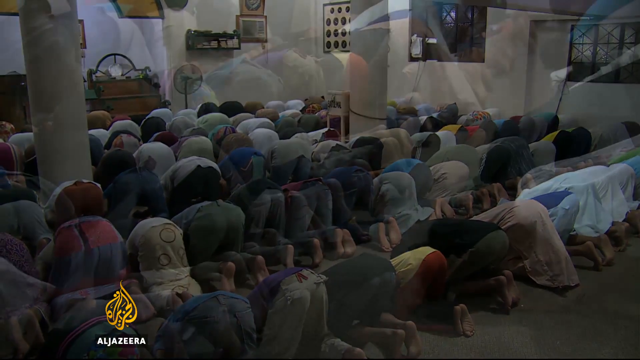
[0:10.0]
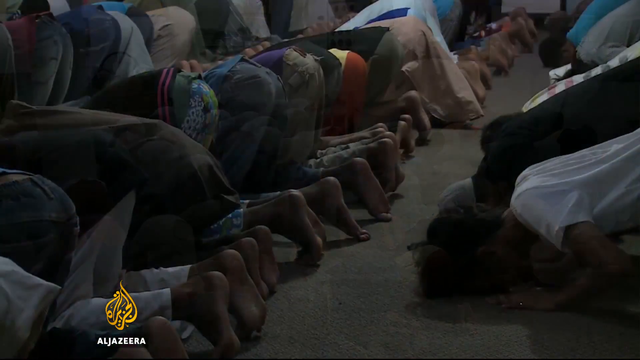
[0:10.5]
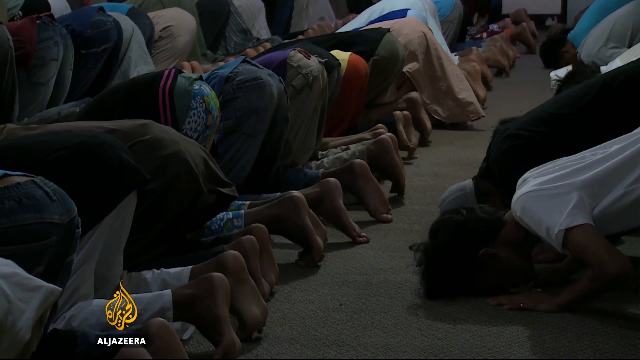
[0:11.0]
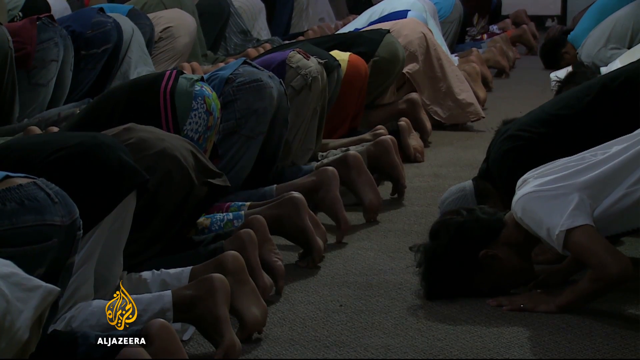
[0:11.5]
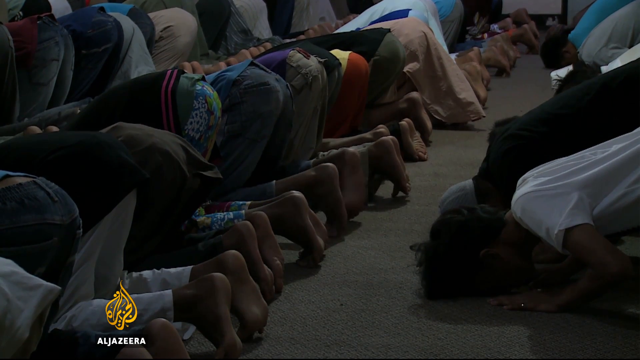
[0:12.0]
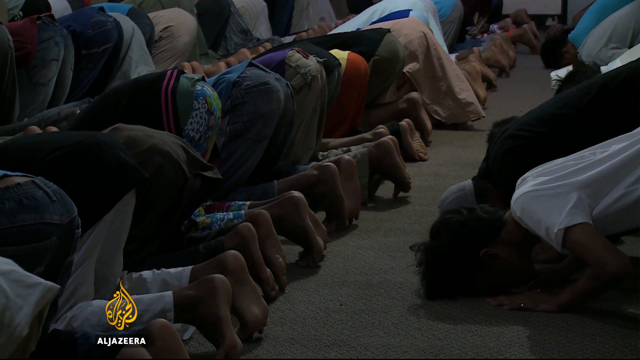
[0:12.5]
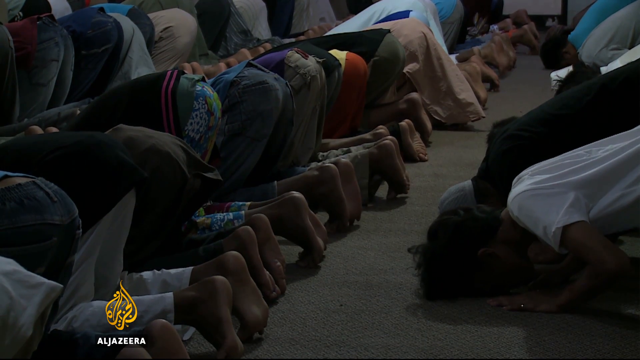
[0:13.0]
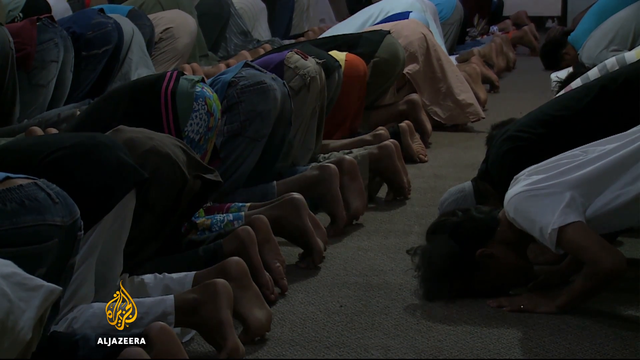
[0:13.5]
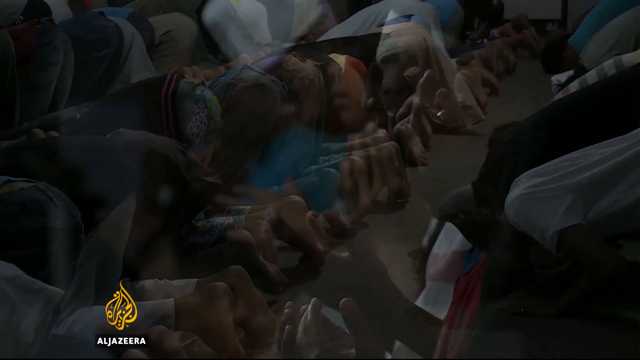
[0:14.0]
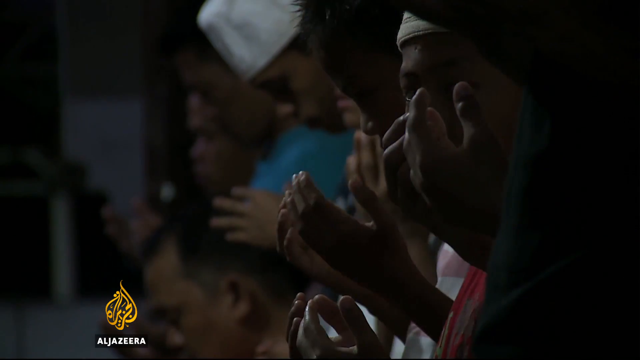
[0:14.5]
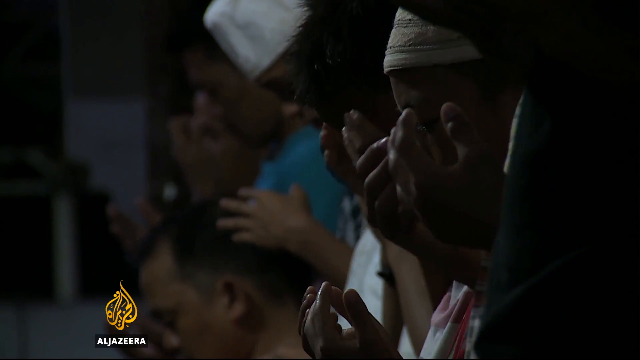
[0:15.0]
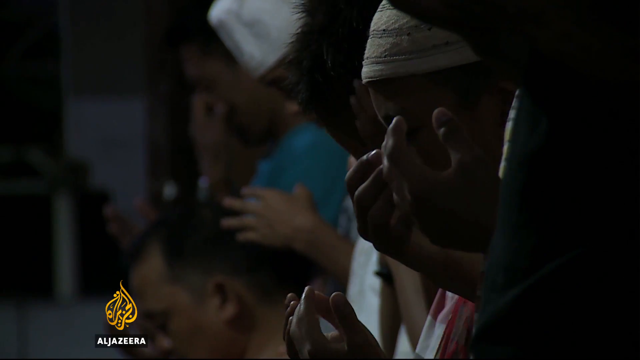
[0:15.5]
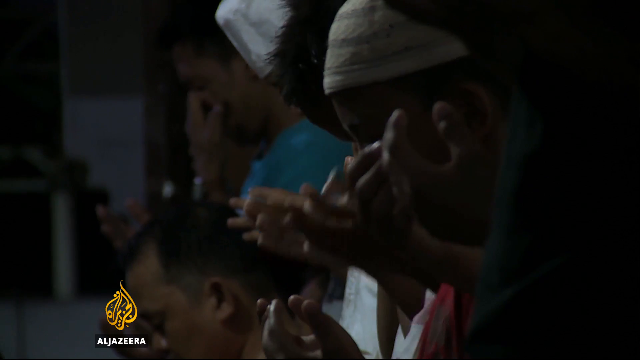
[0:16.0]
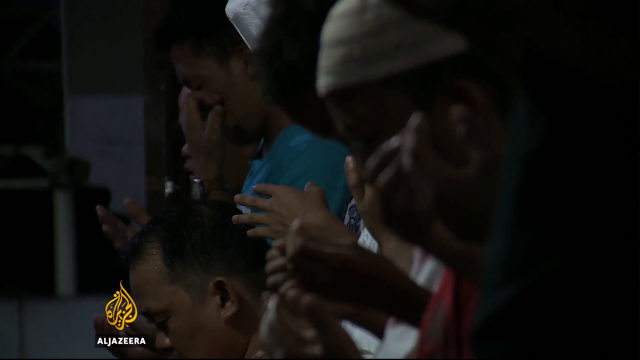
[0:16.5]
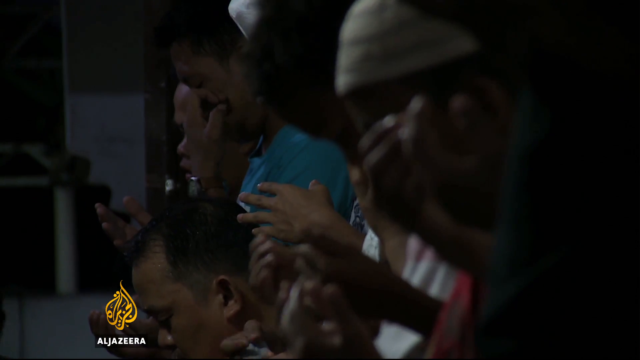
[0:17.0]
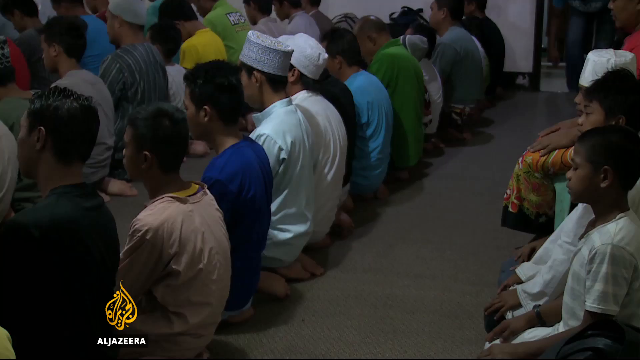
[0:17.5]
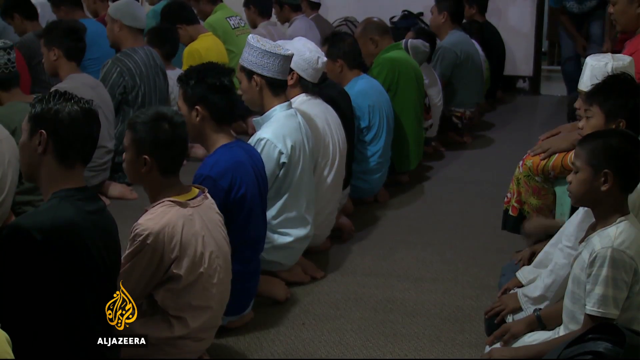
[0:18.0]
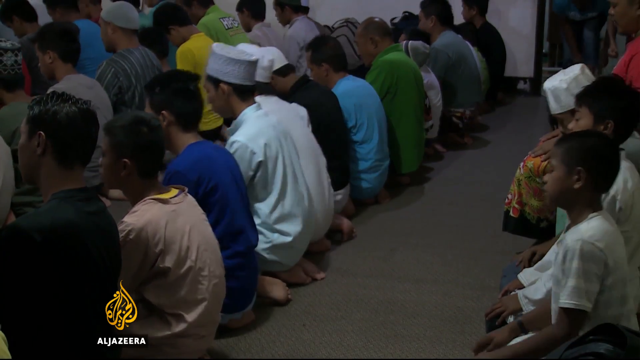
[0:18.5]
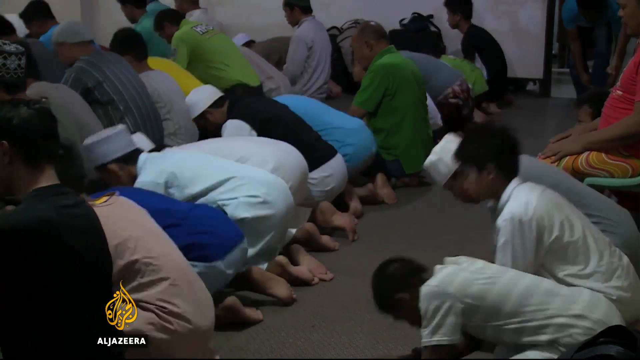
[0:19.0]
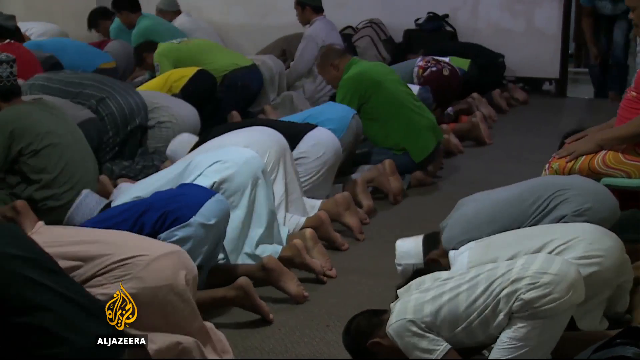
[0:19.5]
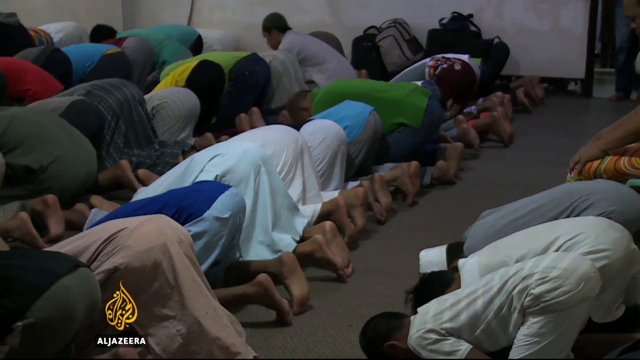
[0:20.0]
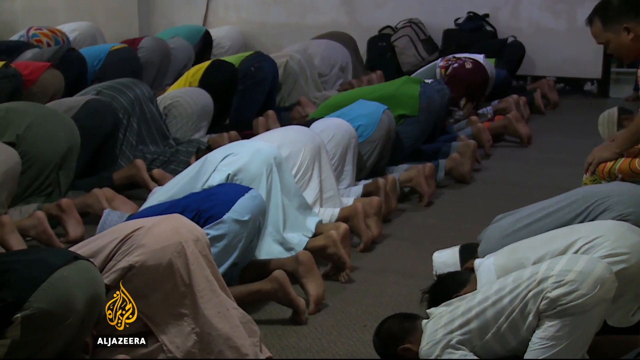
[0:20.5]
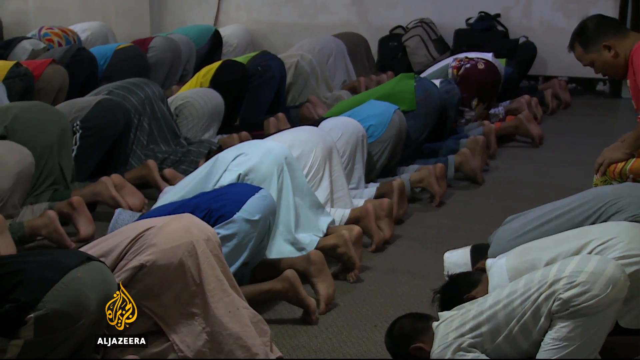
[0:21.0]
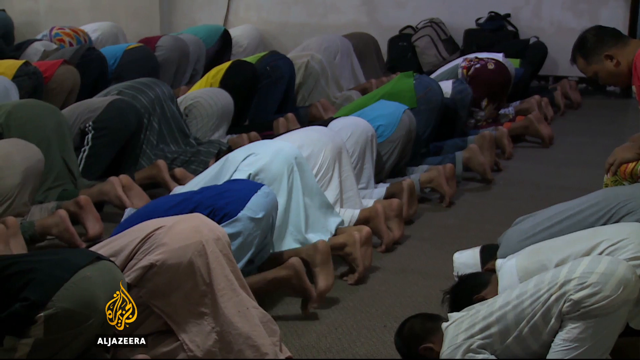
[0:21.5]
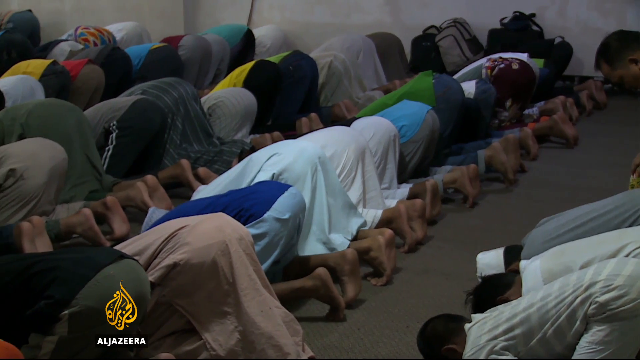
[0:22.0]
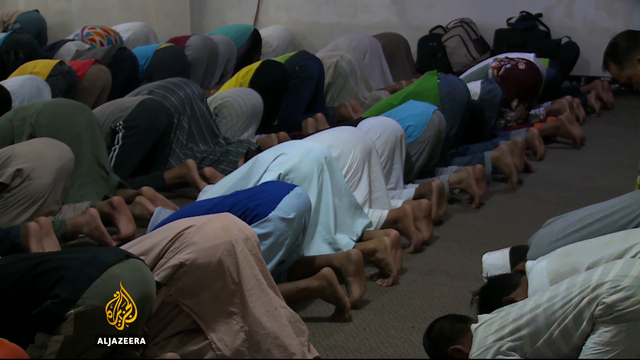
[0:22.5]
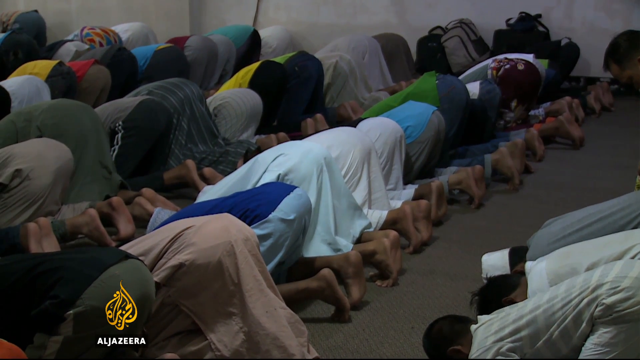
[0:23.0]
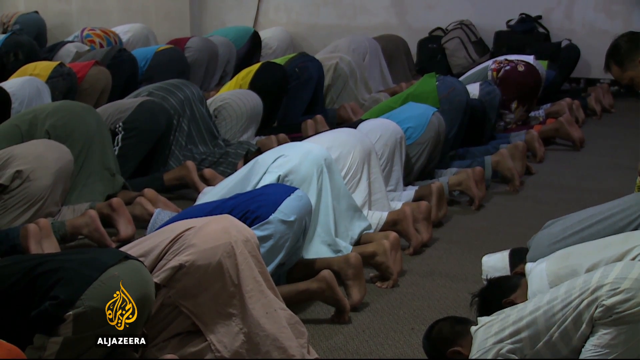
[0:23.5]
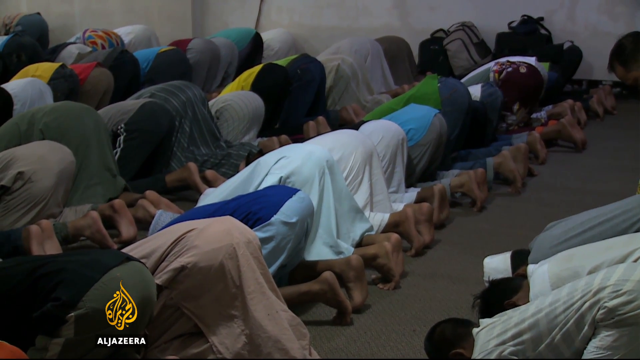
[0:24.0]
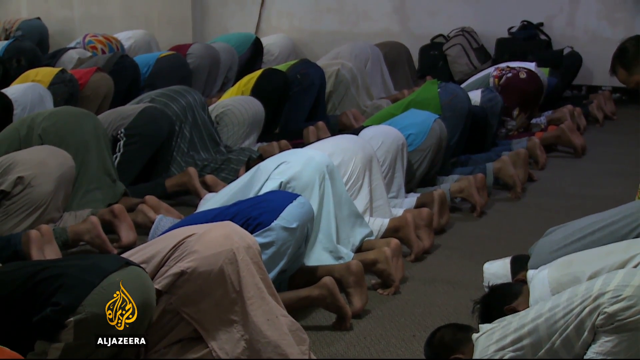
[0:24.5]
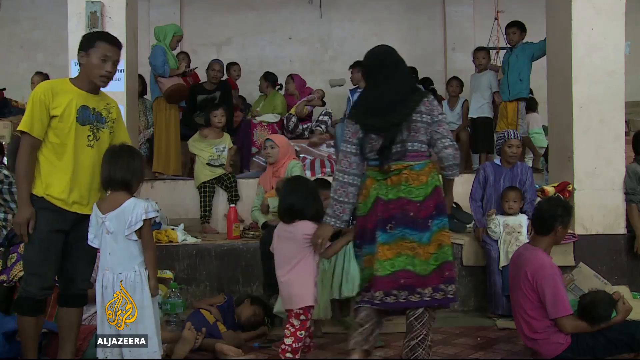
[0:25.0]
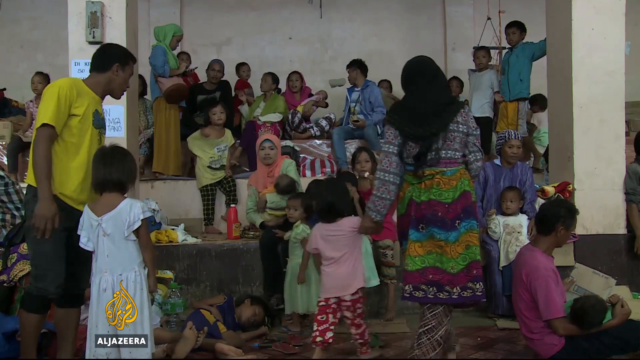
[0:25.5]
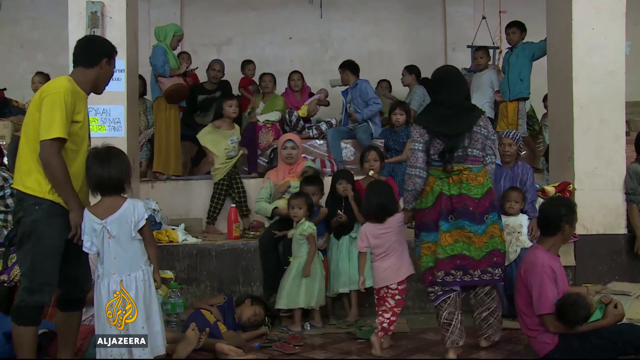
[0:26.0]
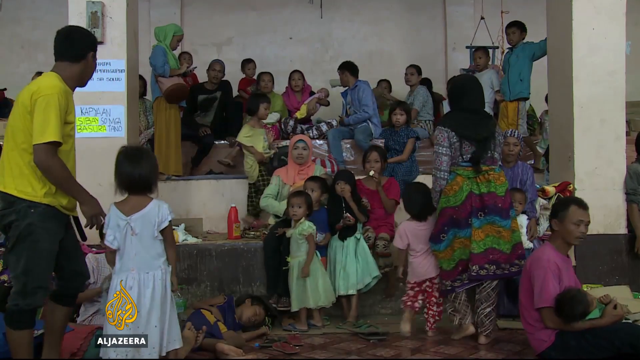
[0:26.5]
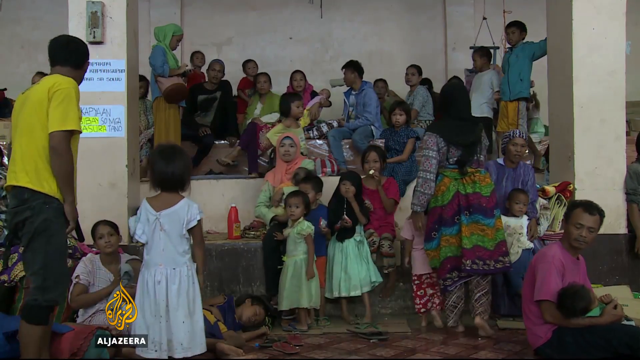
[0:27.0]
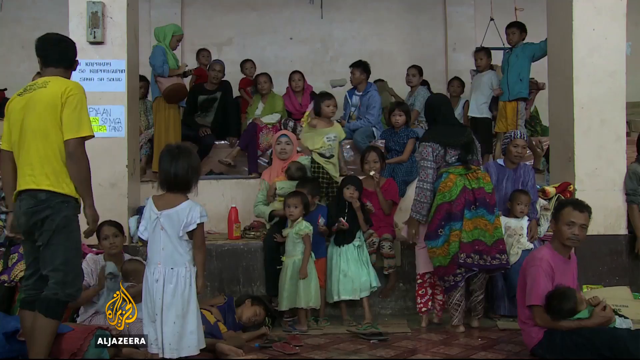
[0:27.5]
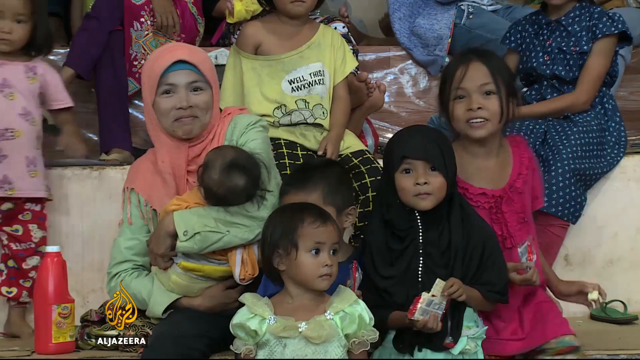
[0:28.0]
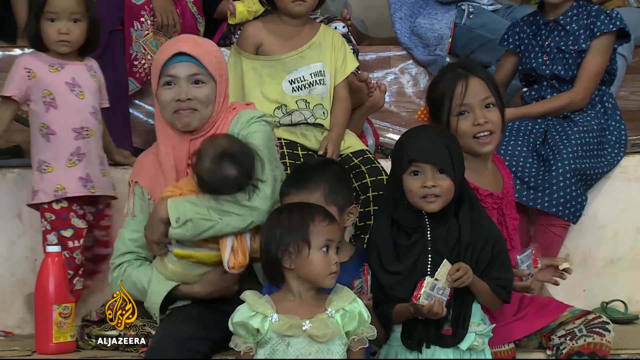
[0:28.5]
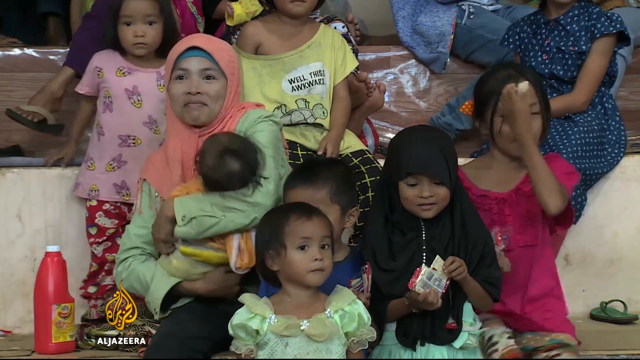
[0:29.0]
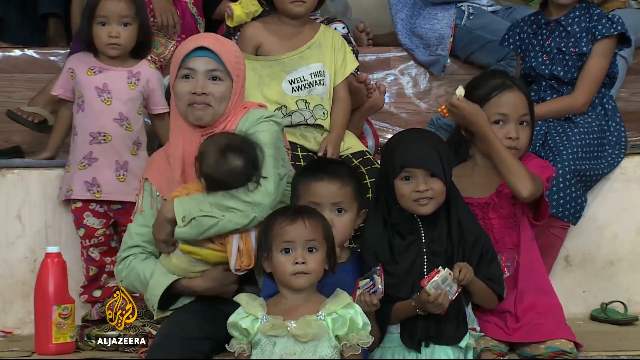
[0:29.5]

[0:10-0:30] More shots show Muslims in prayer, again seen from behind while kneeling. The scene then shifts to what is apparently the Philippine Muslim community, where faces are visible: women and many children are socializing, along with a few men. It could be a street or market scene; it is unclear whether the gathering is outdoors on a street or in an interior, and it may be inside toward the end.